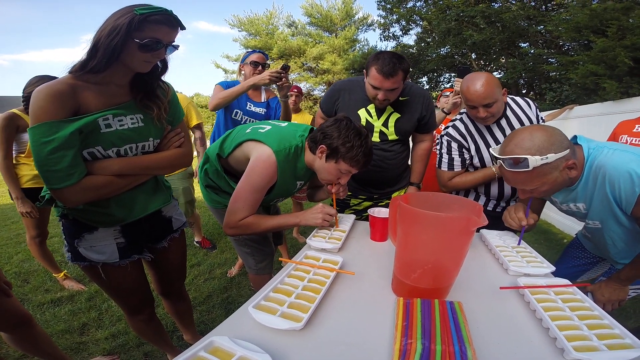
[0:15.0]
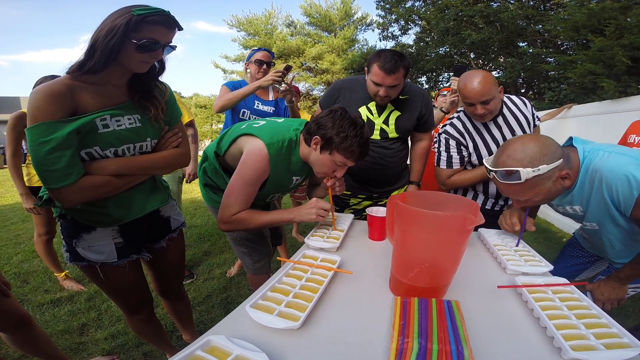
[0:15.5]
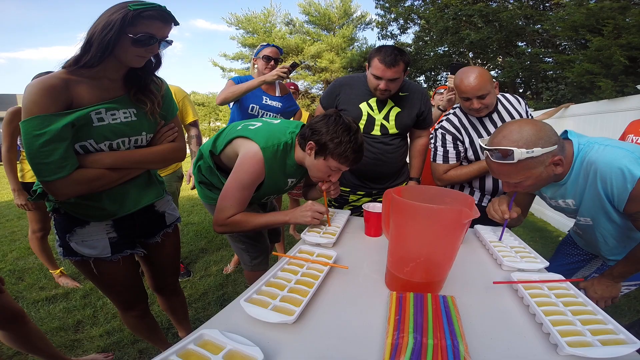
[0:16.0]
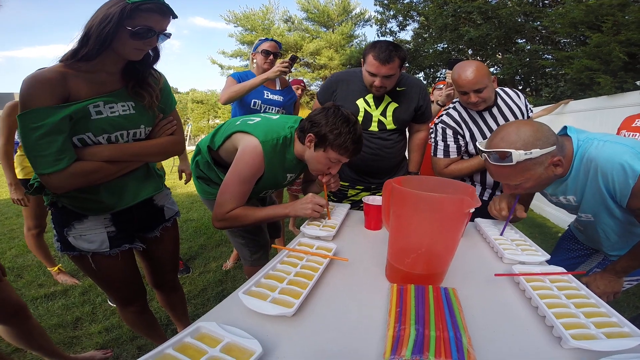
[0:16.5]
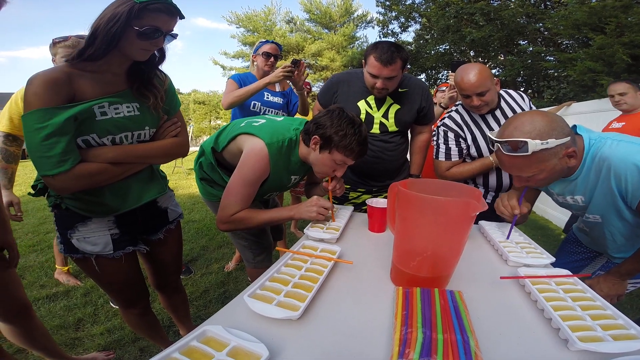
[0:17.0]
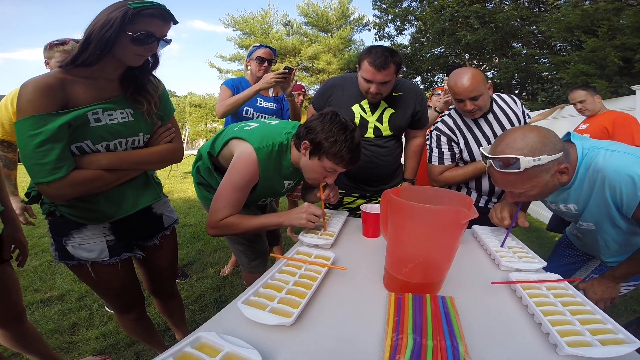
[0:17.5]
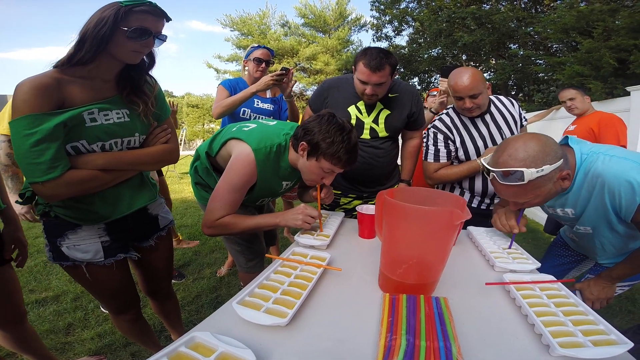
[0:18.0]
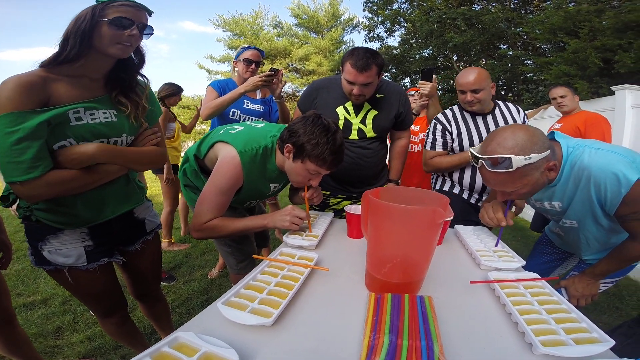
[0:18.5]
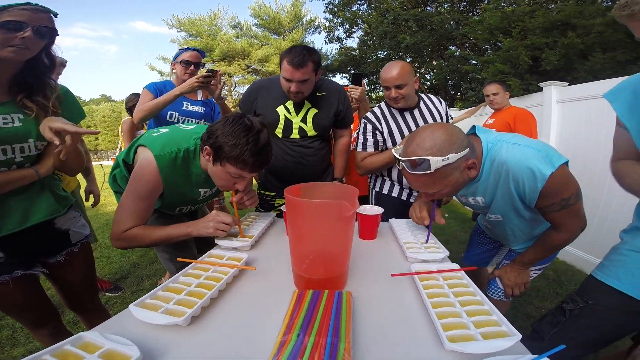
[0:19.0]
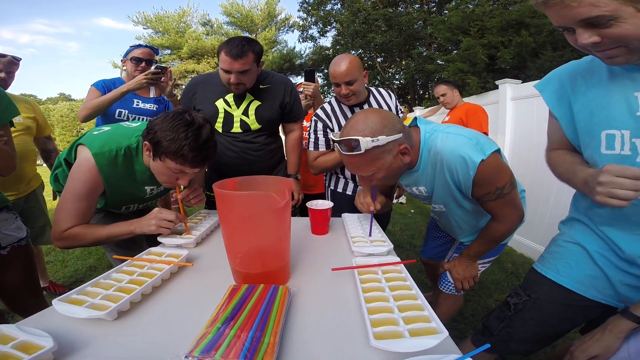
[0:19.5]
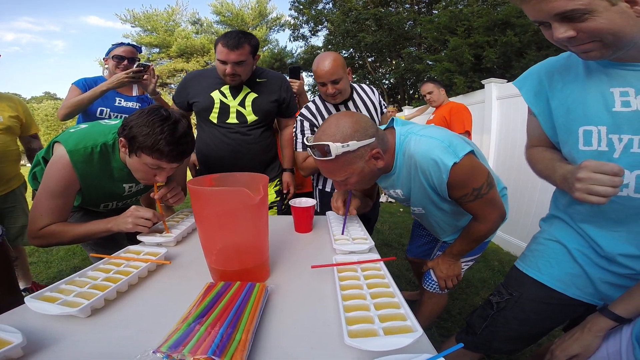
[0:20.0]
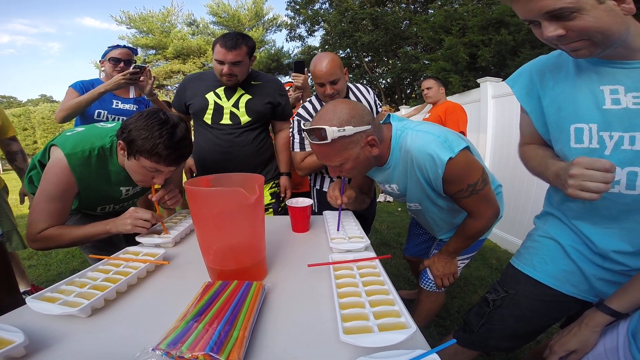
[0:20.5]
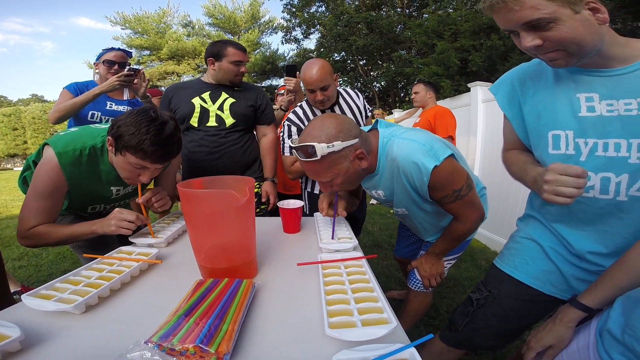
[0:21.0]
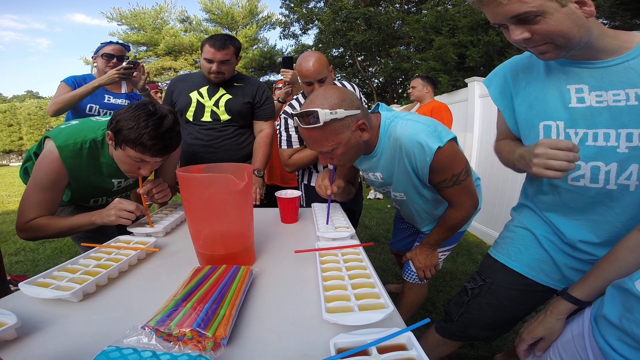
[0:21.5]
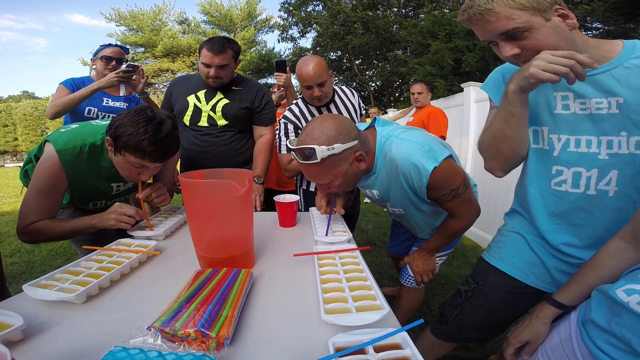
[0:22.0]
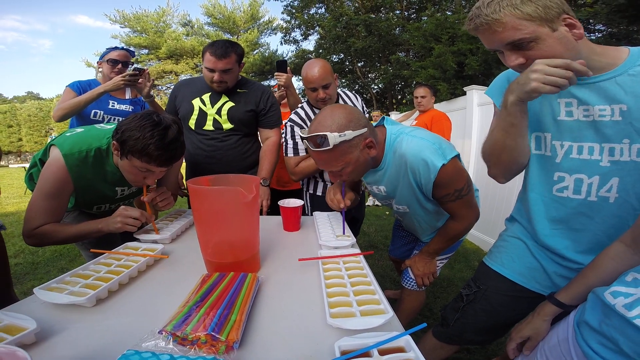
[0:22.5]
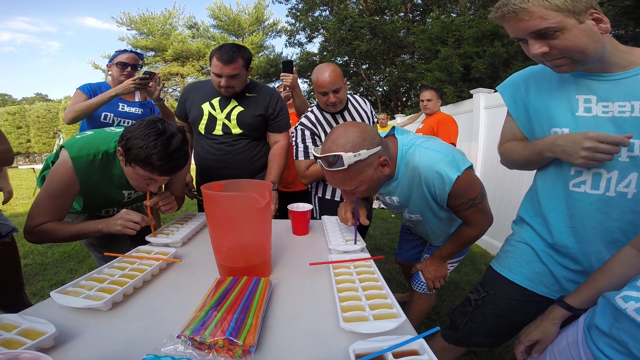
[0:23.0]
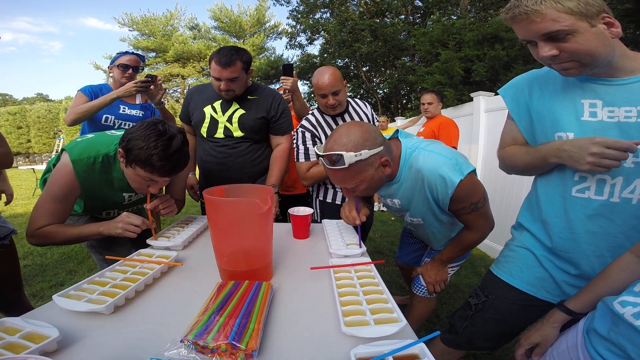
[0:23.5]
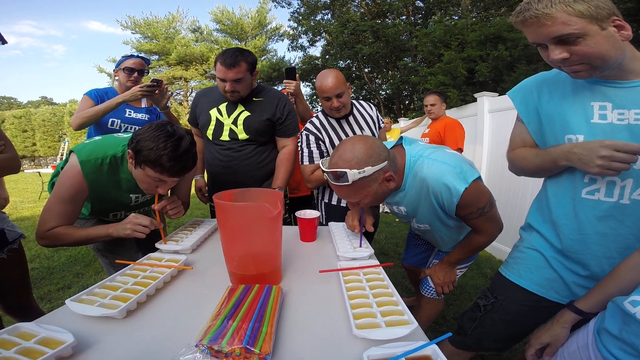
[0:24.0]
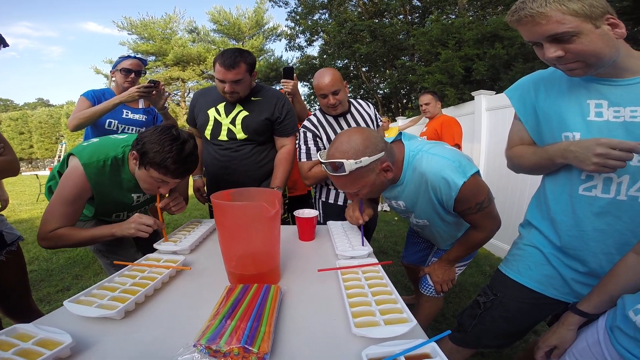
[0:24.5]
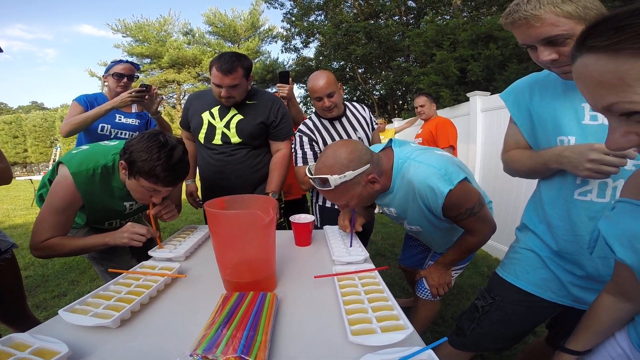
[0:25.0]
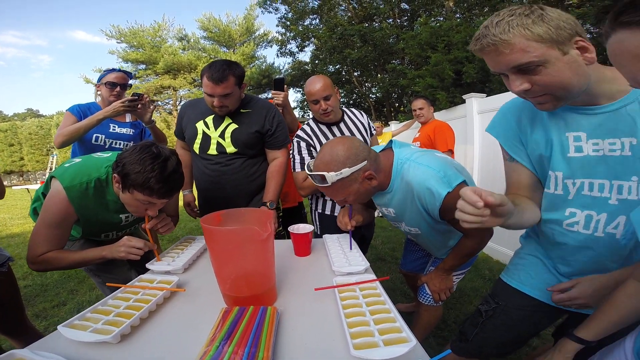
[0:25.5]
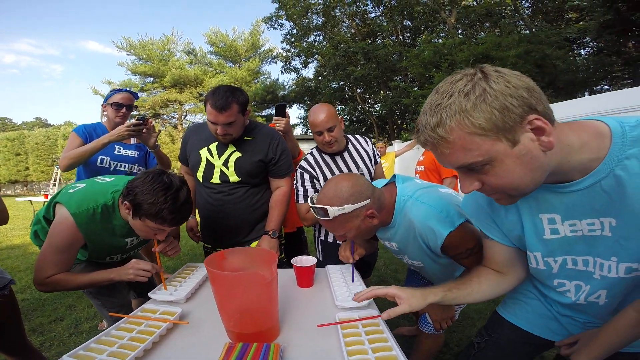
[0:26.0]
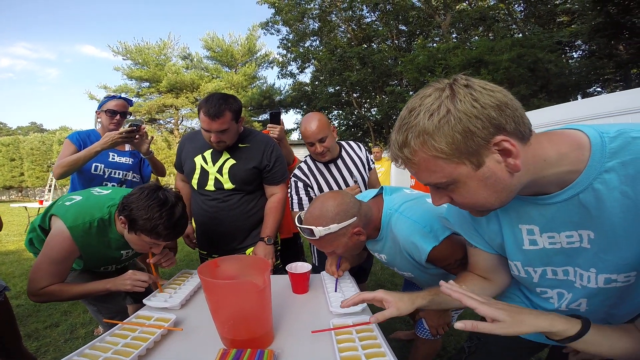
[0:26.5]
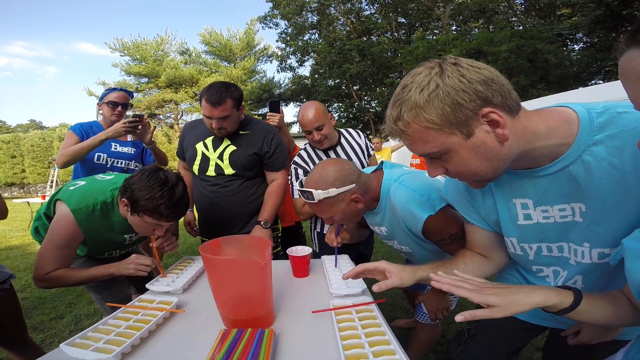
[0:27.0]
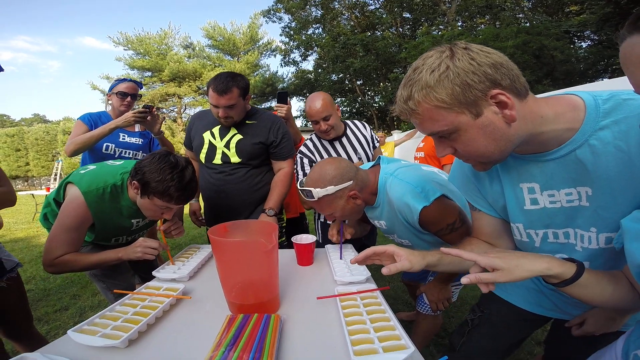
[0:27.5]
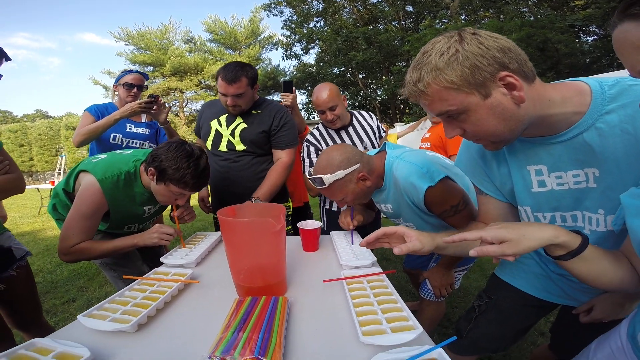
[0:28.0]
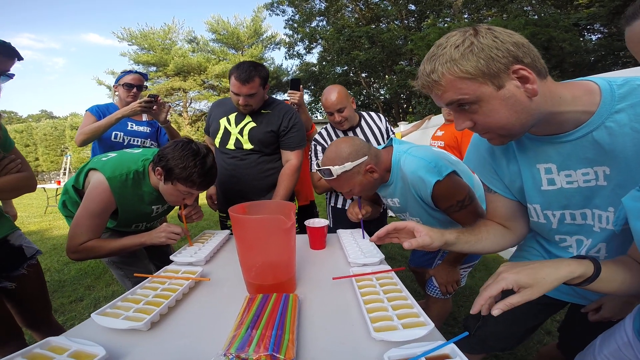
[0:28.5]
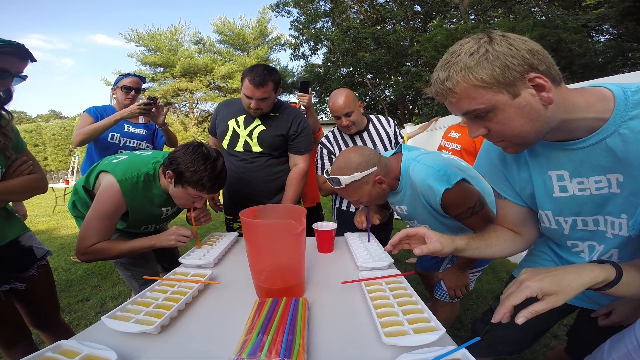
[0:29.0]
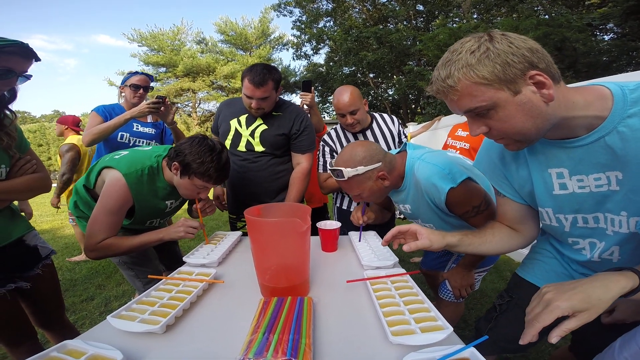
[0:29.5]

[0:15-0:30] The outdoor setting is a grassy area that looks like a park. A long table with a white tablecloth is surrounded by a bunch of people, mostly young Caucasians. Two young men are leaning over. The people on the left wear green T-shirts and the people on the right wear white-blue T-shirts; apparently all the shirts say "Beer Olympics 2014" in white. The two active participants use straws to drink beer from white ice cube trays, one in front of each of them. The guy on the left, in the green shirt, seems to have an orange straw, and the guy on the right seems to have a purple straw. They go one section at a time, sucking up the yellowish liquid, presumably beer. The guy on the right is bald and has kind of white plastic sunglasses up around his forehead; the guy on the left has dark brown hair. Several other people are standing around, including a bald, a little chubby guy in a referee's outfit with long white and black vertical stripes, and a guy in a black shirt with a kind of lime green New York Yankees logo on the front, who leans over to watch. A woman behind him in a dark blue shirt is videotaping the action with a cell phone. People watch as the two race to drink all the beer.